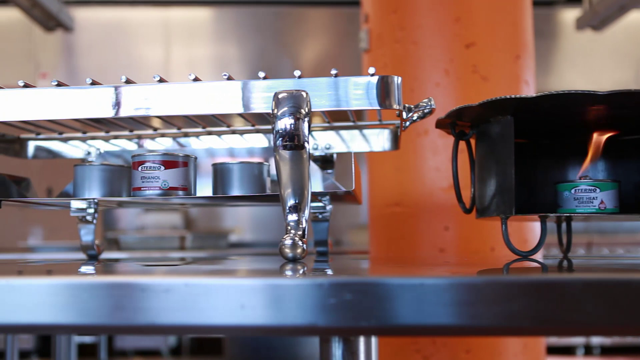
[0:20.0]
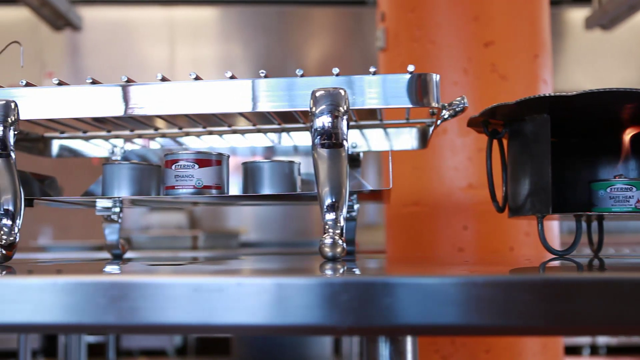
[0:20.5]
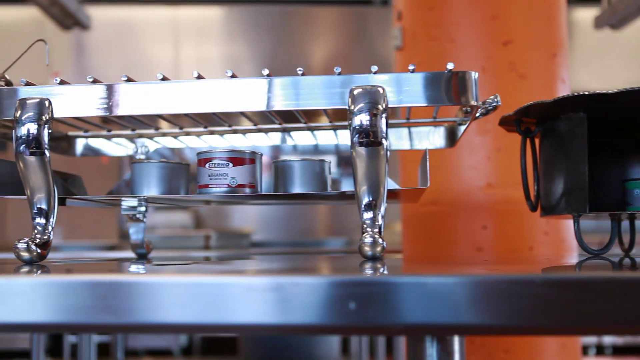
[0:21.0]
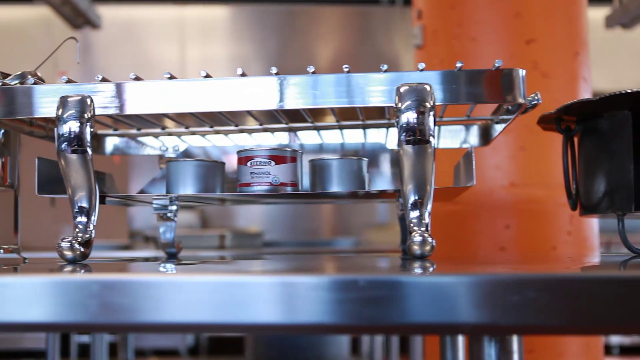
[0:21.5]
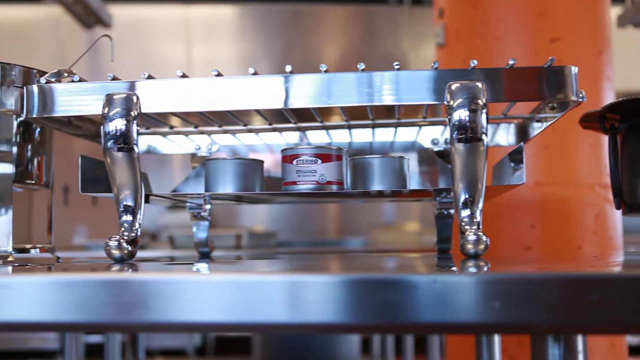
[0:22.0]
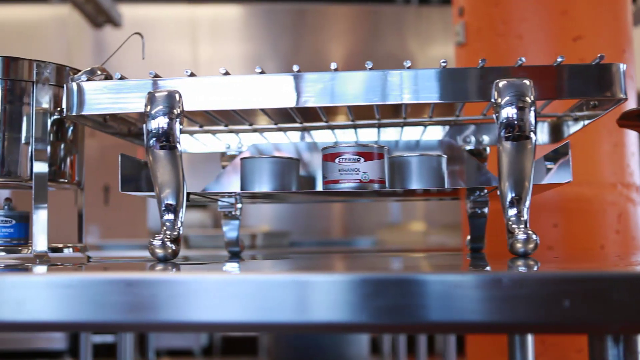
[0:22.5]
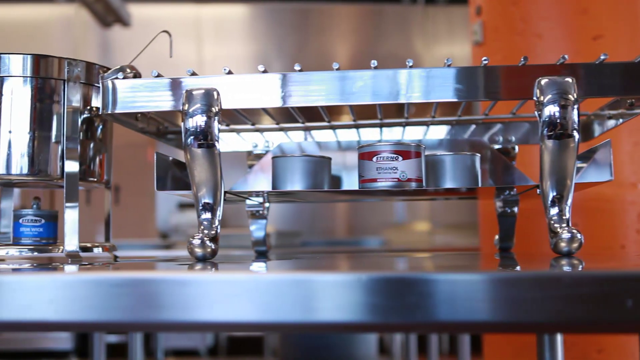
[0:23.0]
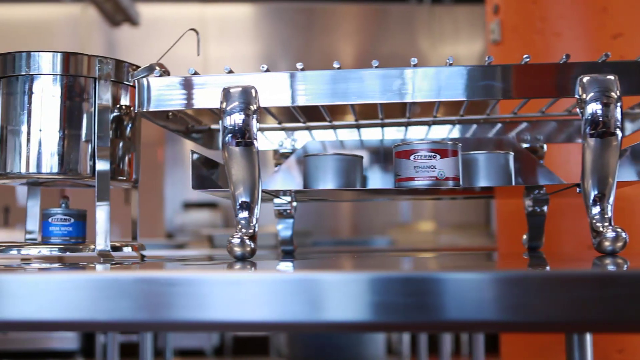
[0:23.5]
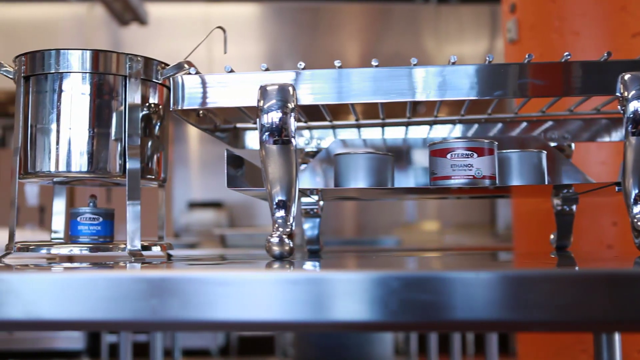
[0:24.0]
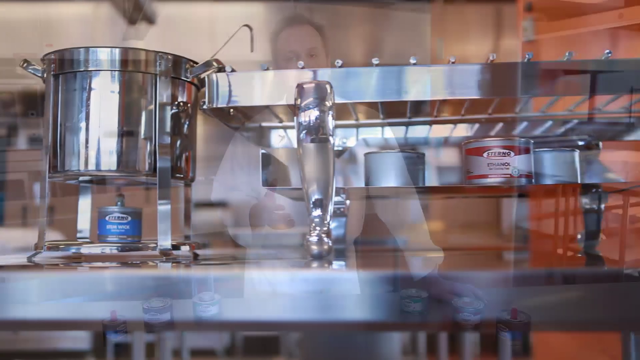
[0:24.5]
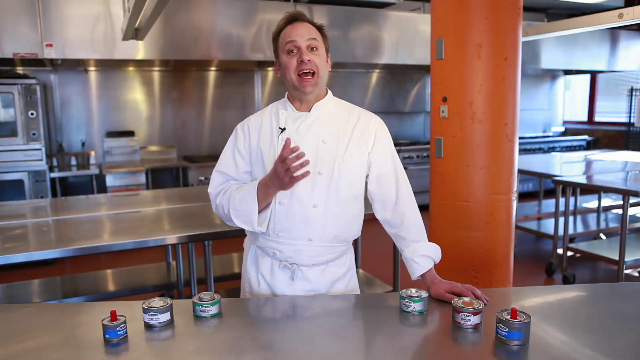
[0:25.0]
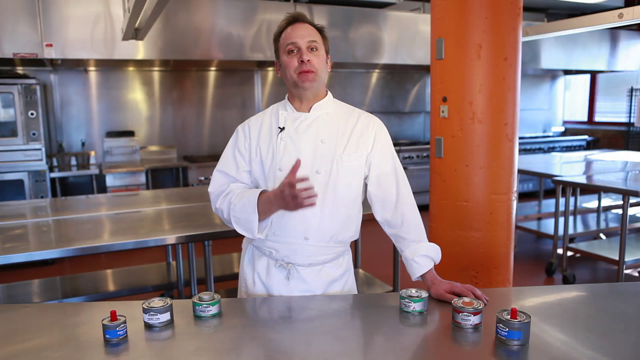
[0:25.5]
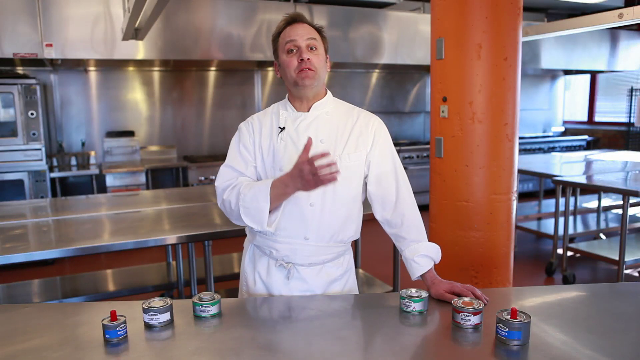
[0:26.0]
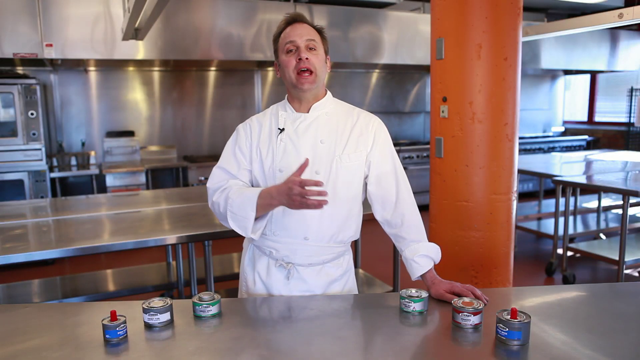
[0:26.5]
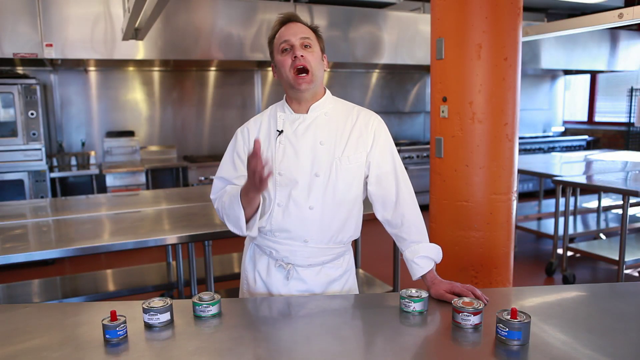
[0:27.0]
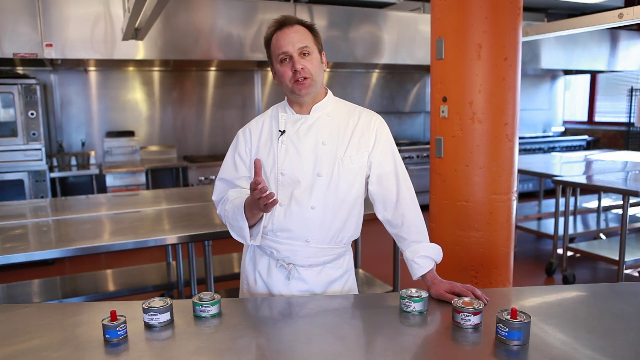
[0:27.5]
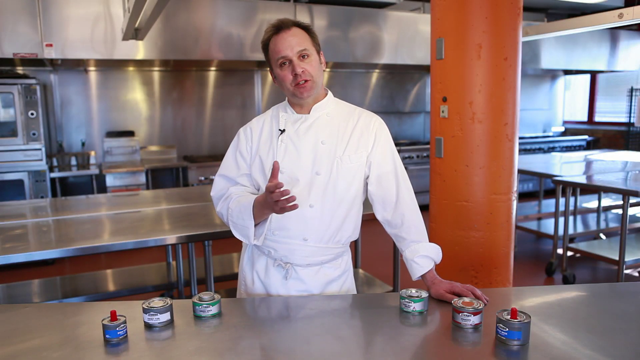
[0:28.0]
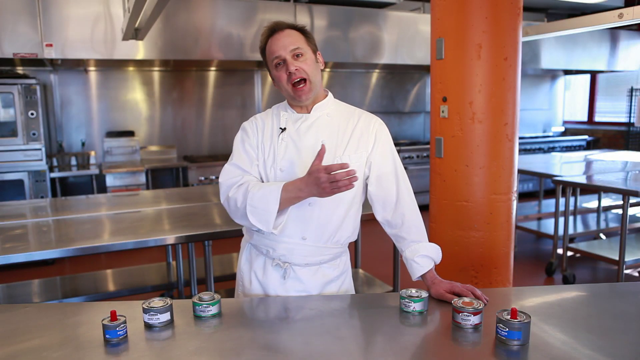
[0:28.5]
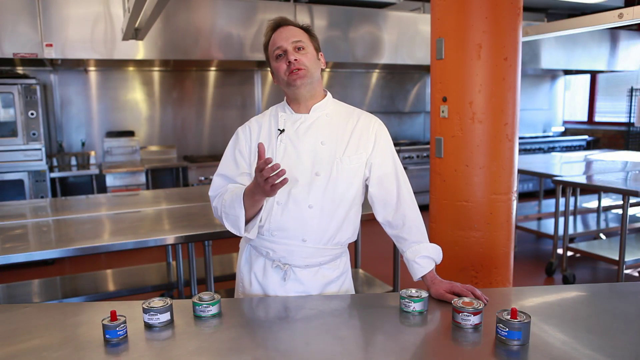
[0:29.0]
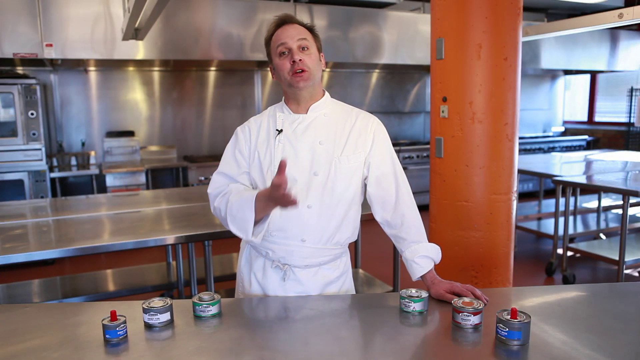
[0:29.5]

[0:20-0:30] The interior of a commercial kitchen is shown. On the left is a piece of stainless steel equipment, and on the right is a black pot with a Sterno can in the center of it, its flame going. At the back is a stainless steel kitchen wall with an orange panel, and at the far right is a beige wall. The camera pans left, showing several pieces of equipment with a Sterno can underneath. The scene changes to a chef standing in the center of a kitchen in an all-white chef's uniform with a white apron. He speaks to the camera, gesturing with his right hand while his left hand rests on a table. The video cuts to a view of Sterno cans being used under various cooking pots in a commercial kitchen, then returns to the chef, who speaks to the camera and gestures with his right hand. Several Sterno cans are on the table in front of him.